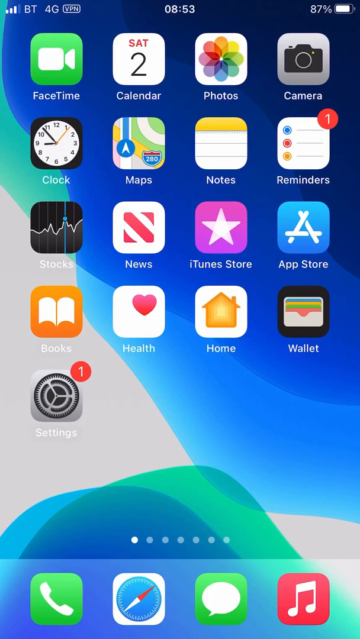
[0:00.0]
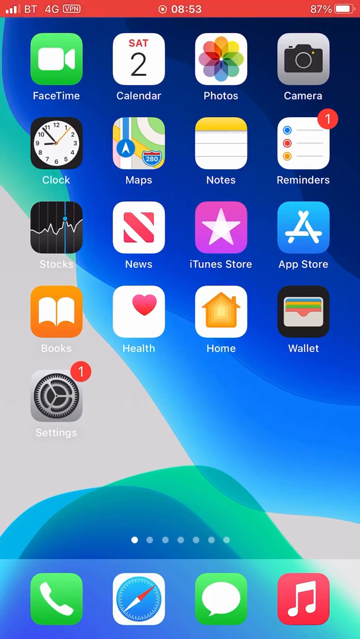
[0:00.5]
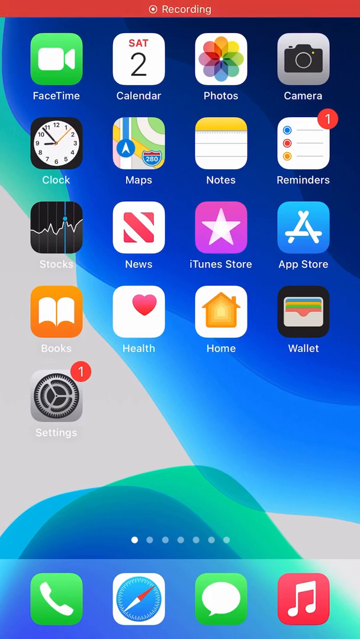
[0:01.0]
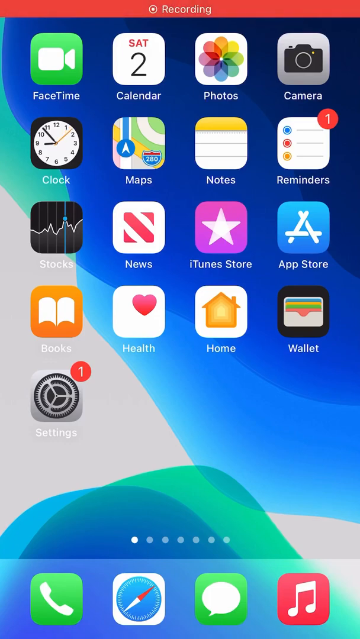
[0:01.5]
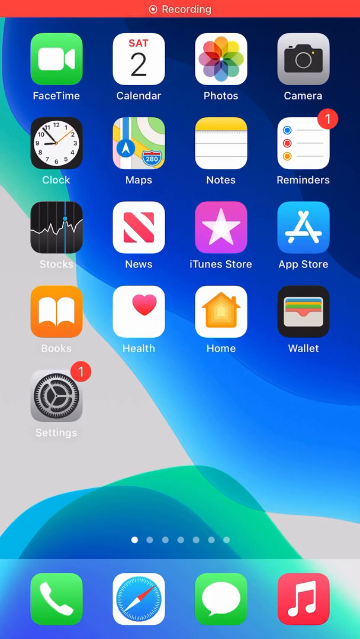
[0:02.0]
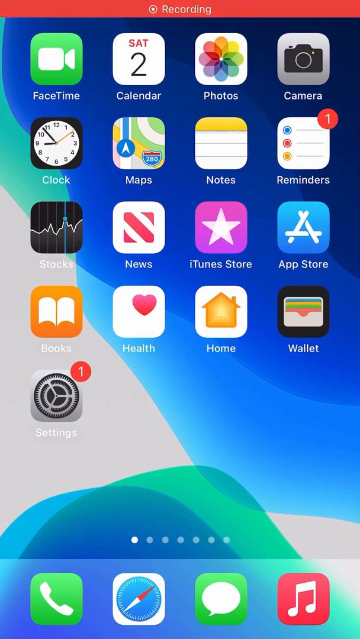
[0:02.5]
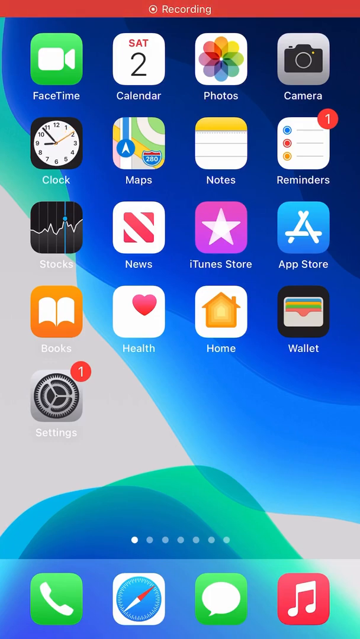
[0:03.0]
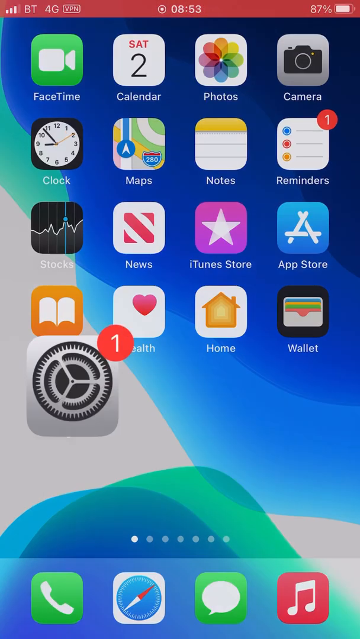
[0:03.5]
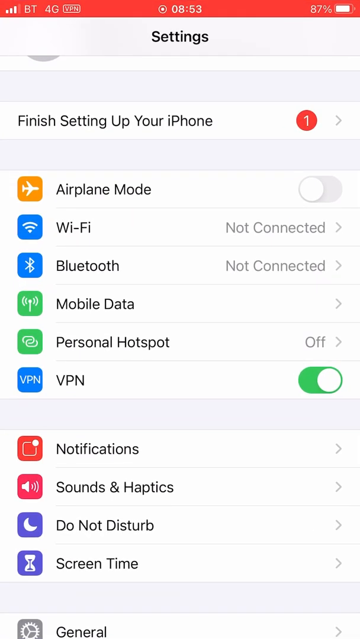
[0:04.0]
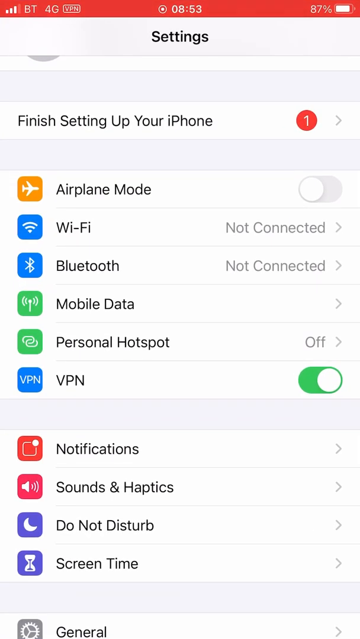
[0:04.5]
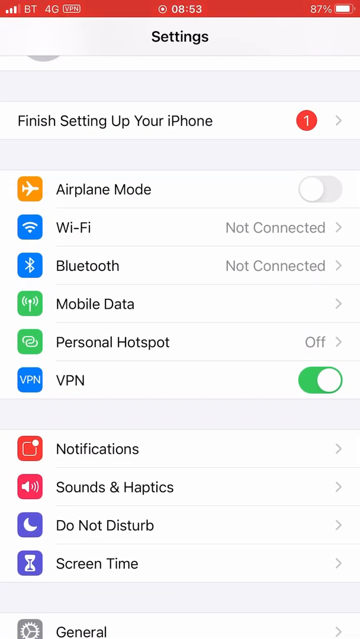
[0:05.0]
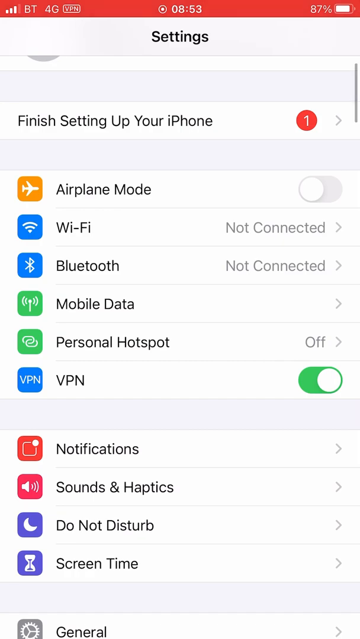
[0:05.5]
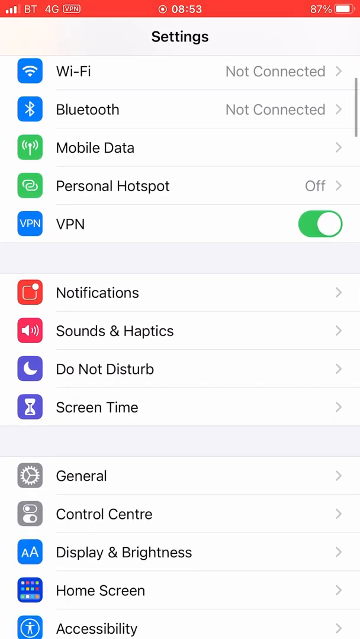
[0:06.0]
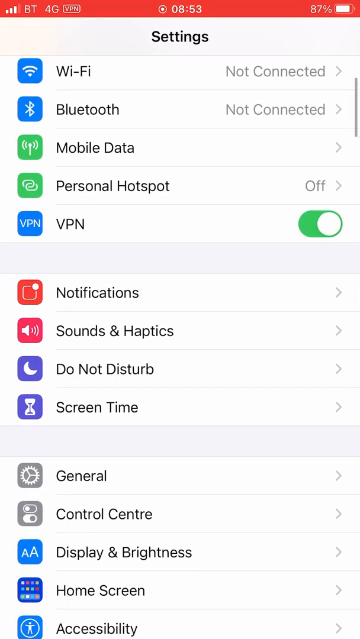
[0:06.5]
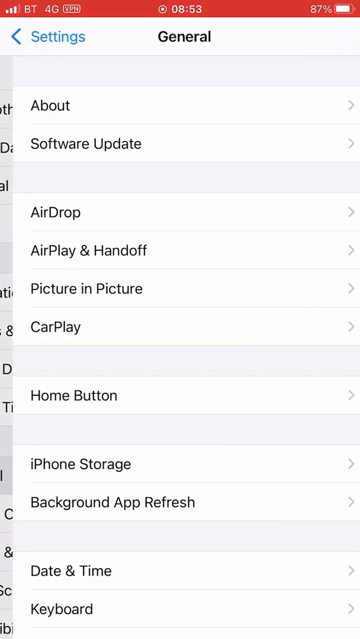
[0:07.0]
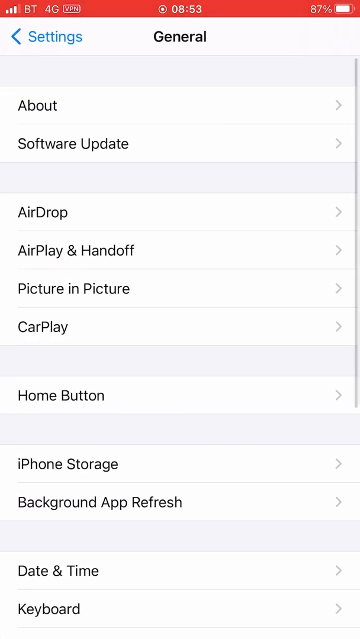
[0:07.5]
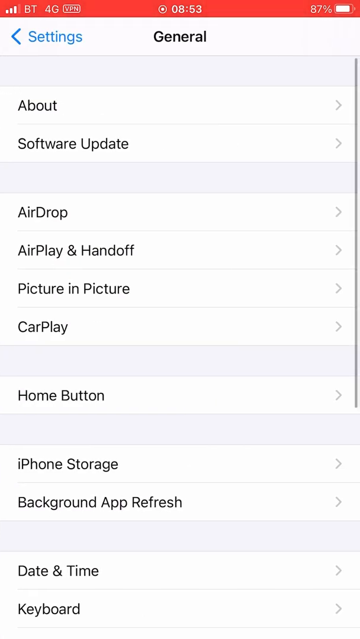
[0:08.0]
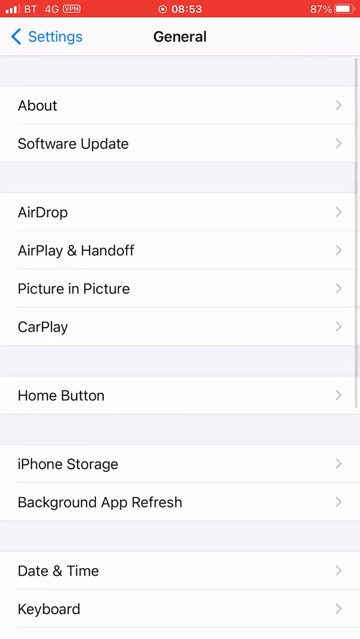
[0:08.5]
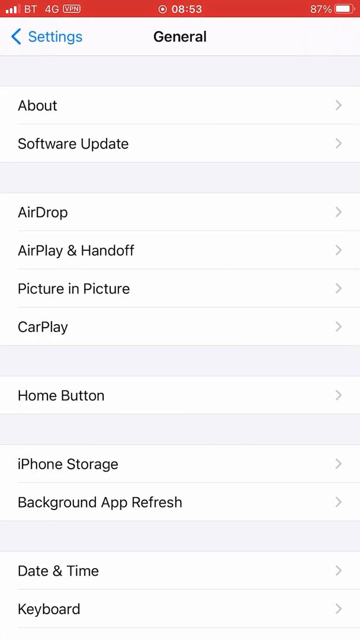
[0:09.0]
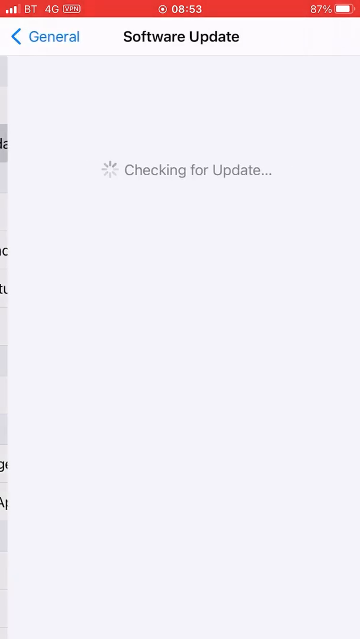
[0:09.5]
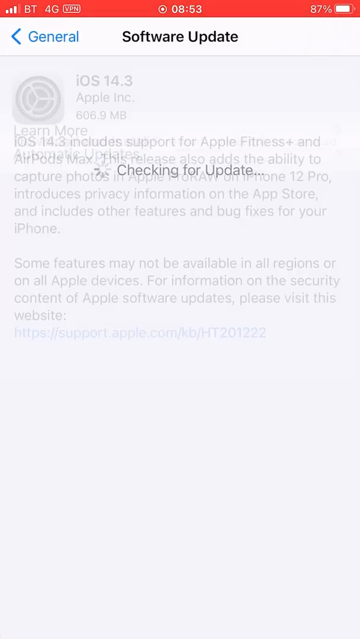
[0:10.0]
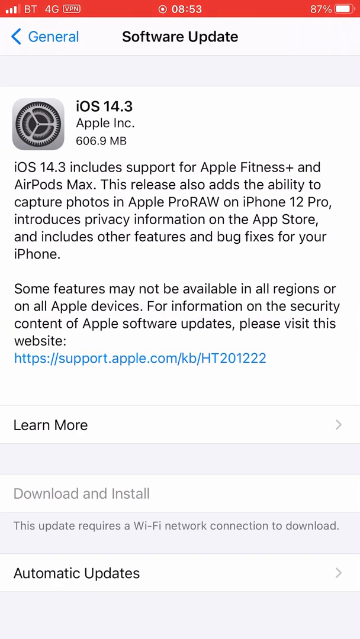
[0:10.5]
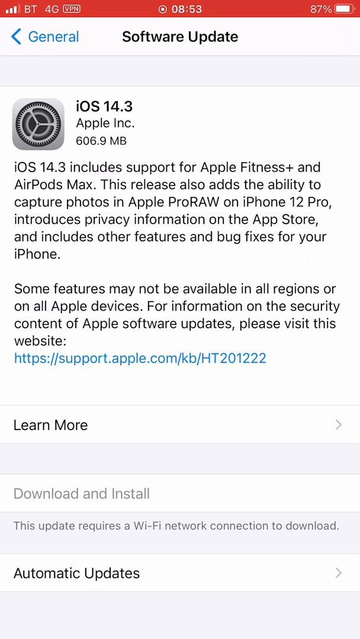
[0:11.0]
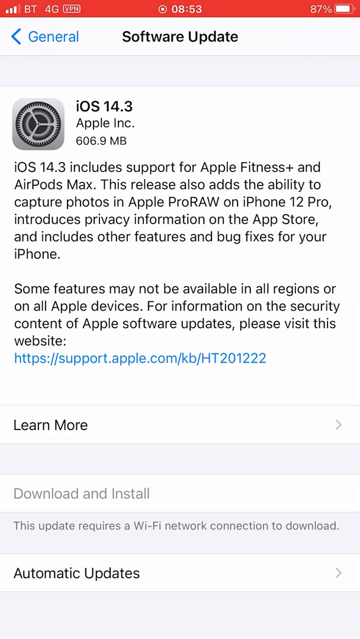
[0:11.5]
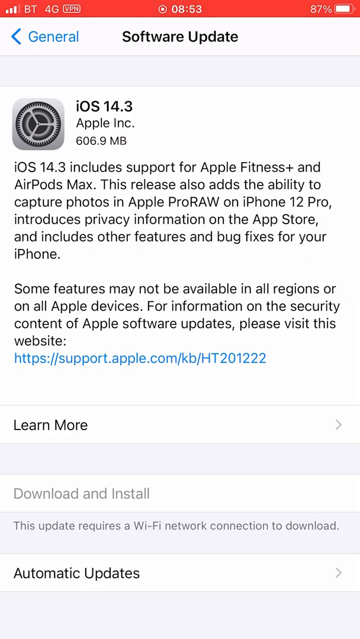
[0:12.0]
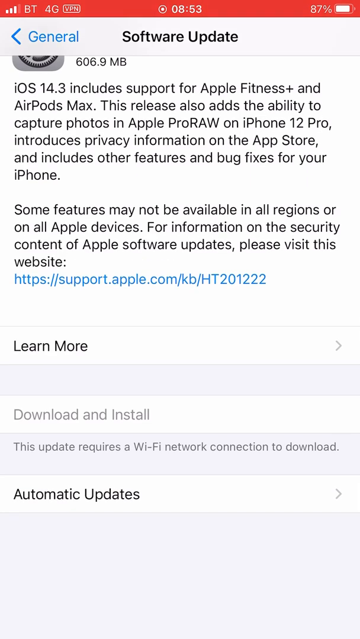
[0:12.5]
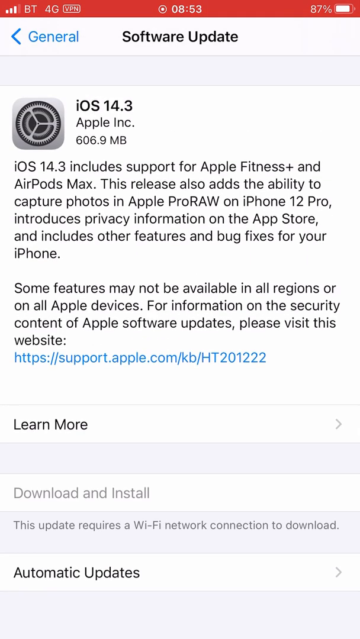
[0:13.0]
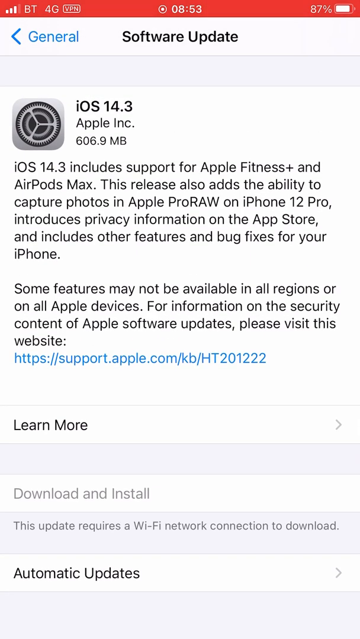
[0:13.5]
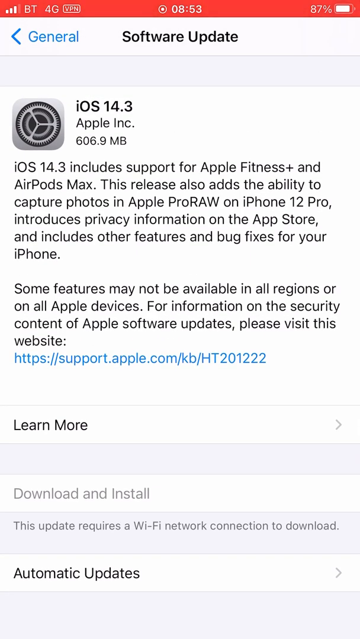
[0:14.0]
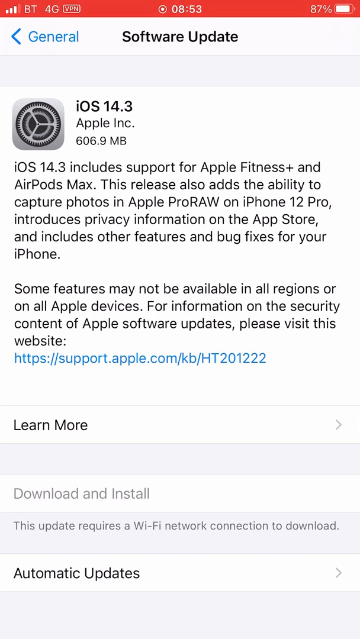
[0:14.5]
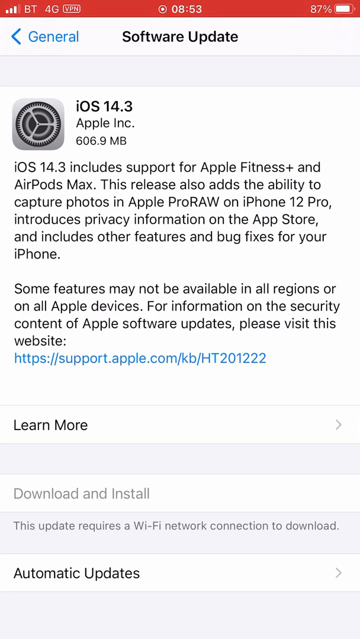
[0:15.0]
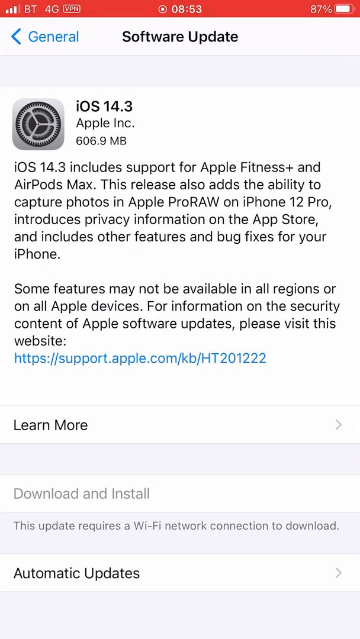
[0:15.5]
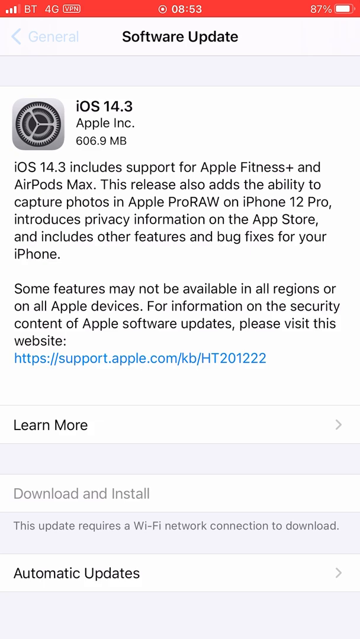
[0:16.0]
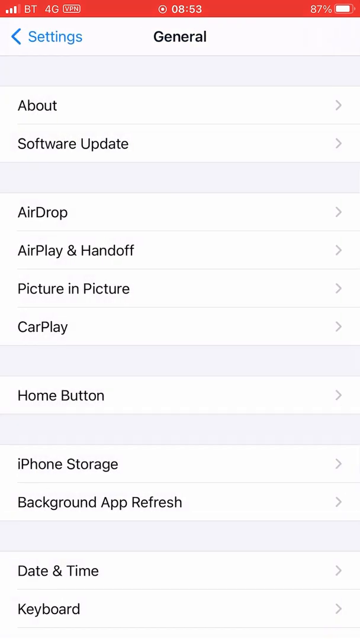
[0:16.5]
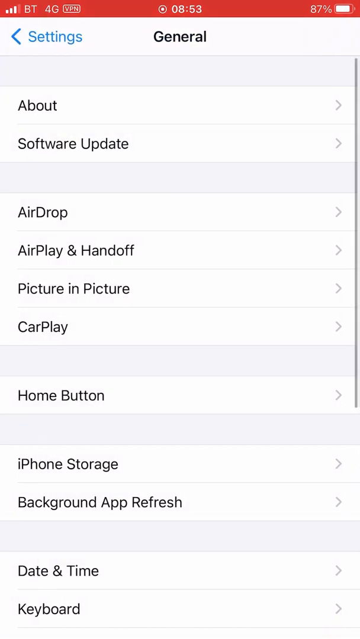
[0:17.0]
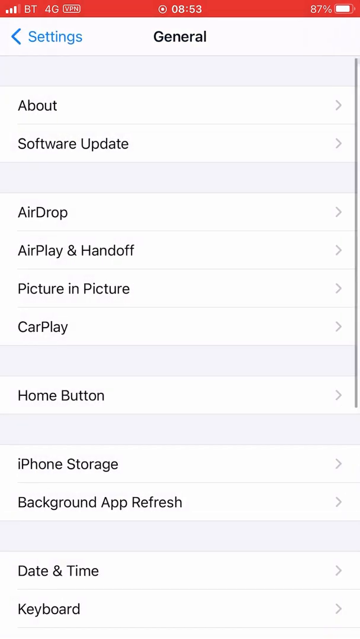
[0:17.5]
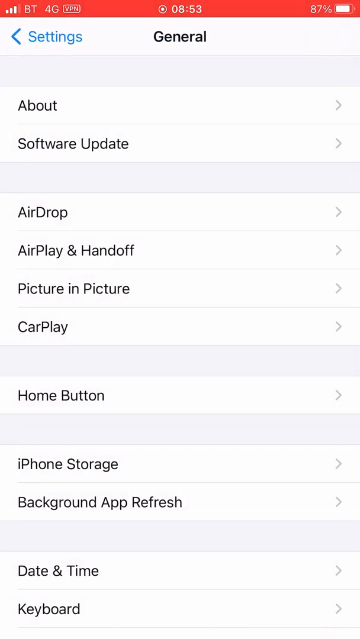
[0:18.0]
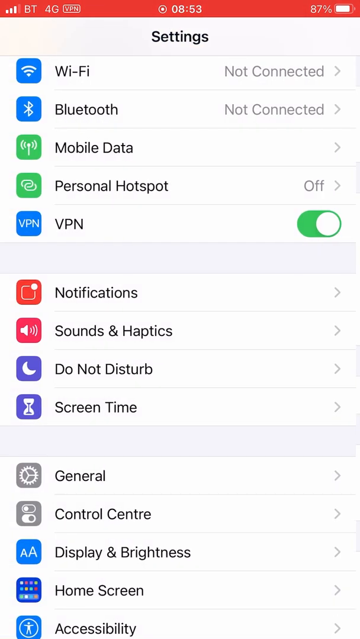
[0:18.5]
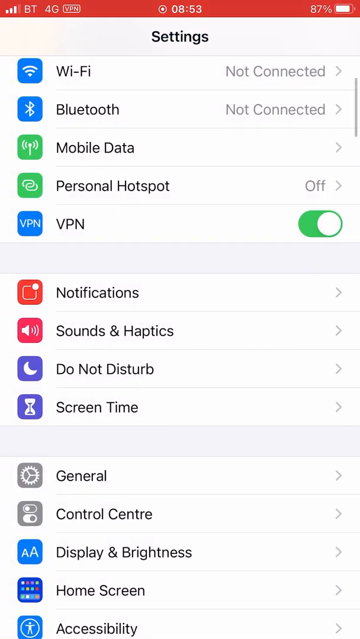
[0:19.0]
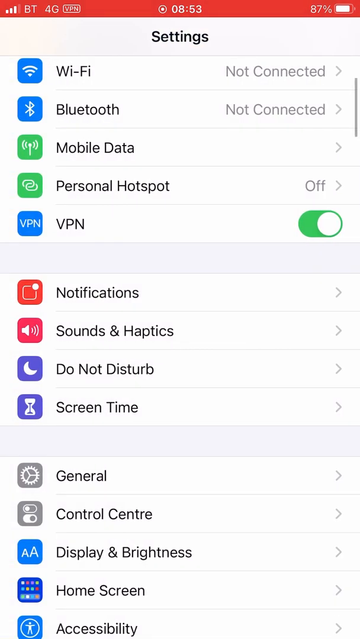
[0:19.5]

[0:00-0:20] The main screen of an iPhone is shown, with a typical wallpaper and apps such as FaceTime, Calendar and Photos; the phone is apparently brand new. The status bar shows a 4G connection with three bars of signal. The person opens Settings, then General, then Software Update. An update to iOS 14.3 is available, but the person cannot install it because there is no Wi-Fi network connection. He goes back to General and then back to Settings.